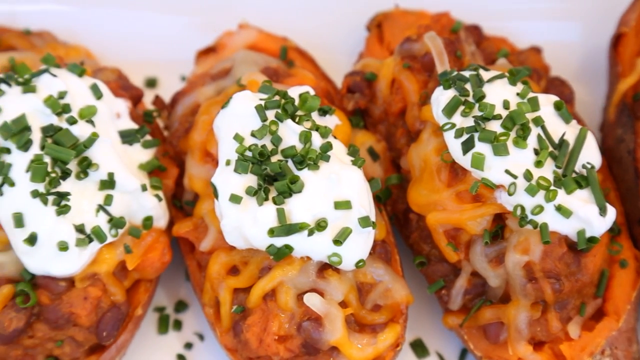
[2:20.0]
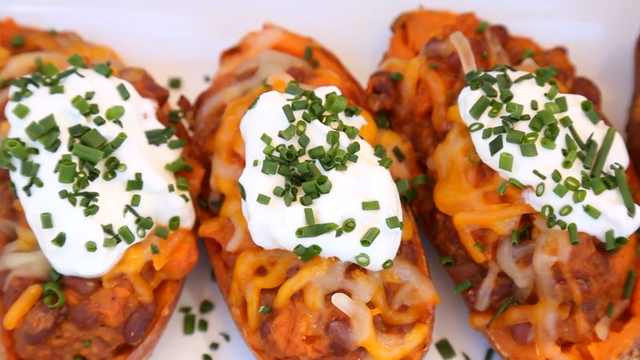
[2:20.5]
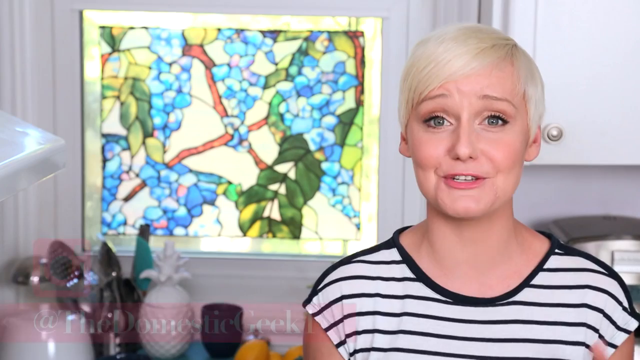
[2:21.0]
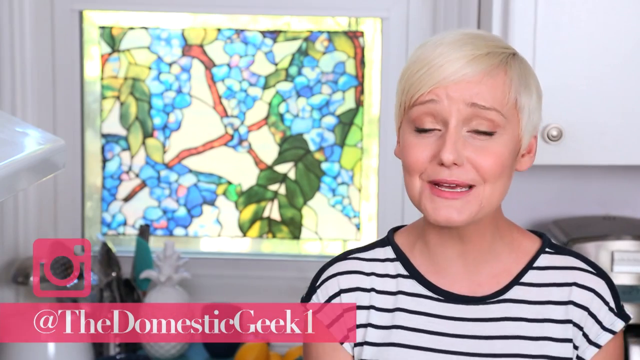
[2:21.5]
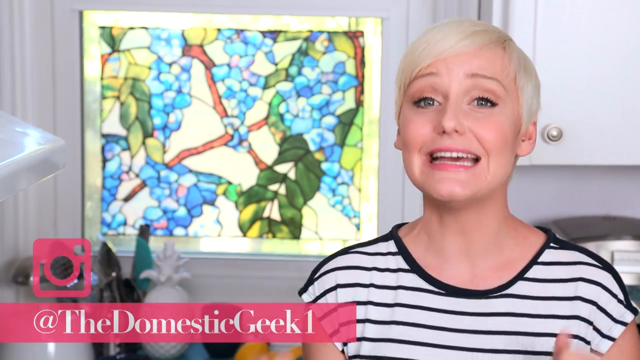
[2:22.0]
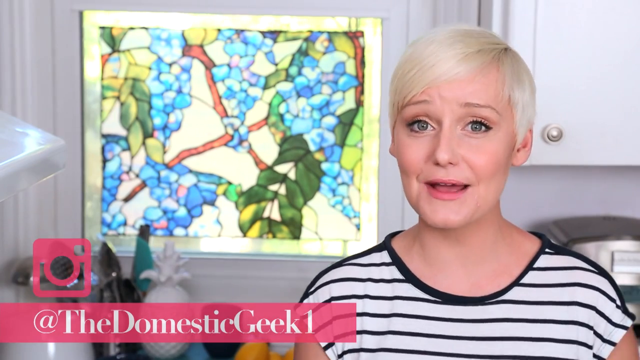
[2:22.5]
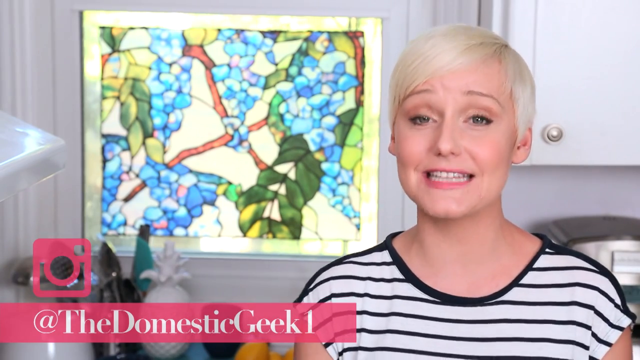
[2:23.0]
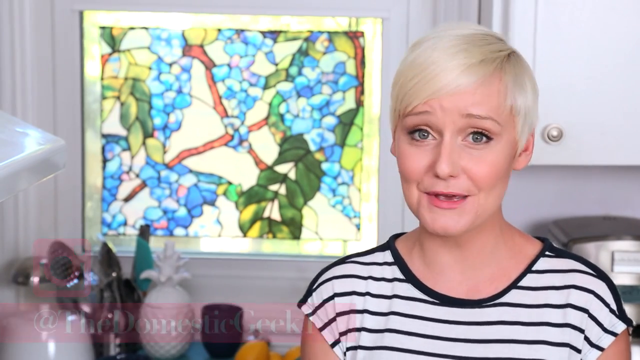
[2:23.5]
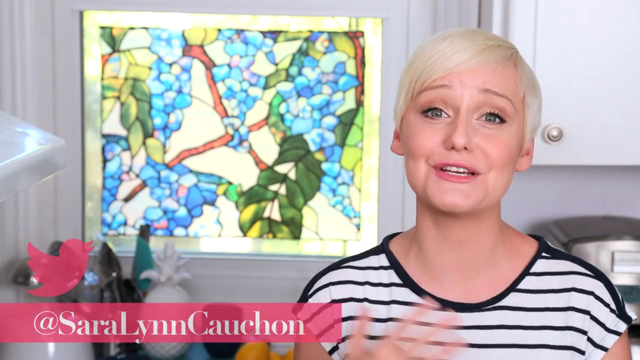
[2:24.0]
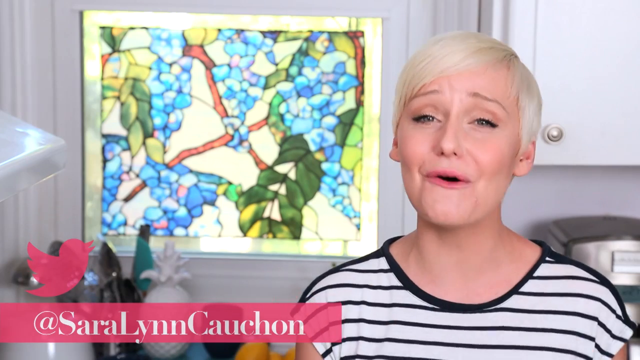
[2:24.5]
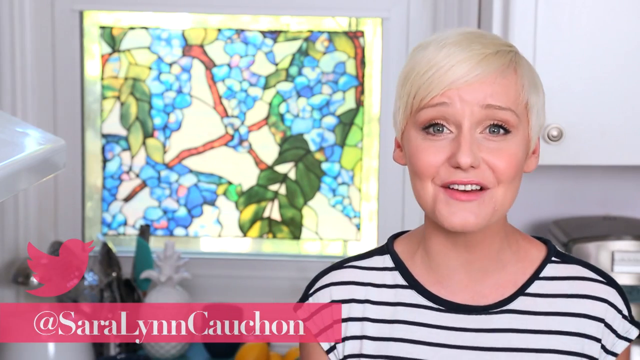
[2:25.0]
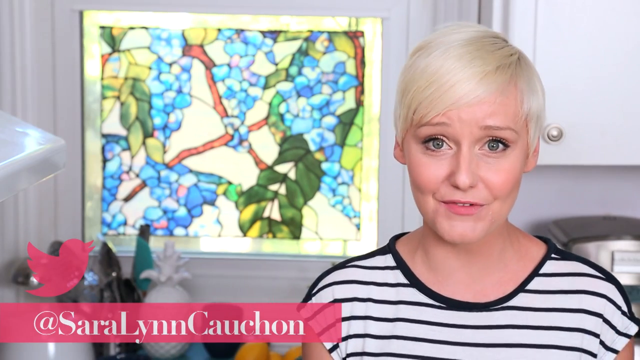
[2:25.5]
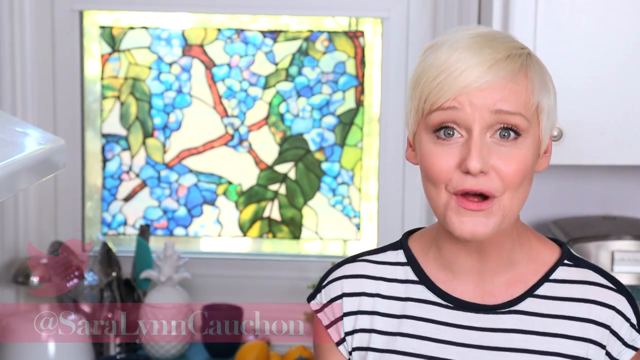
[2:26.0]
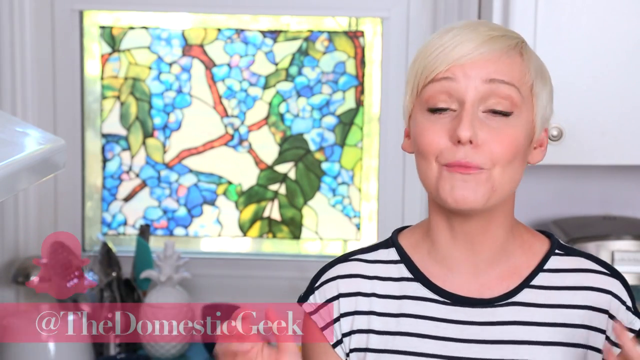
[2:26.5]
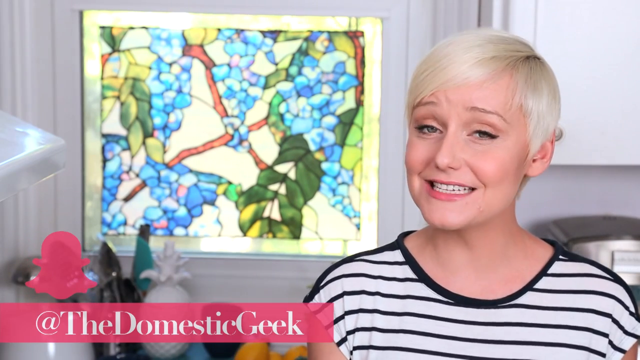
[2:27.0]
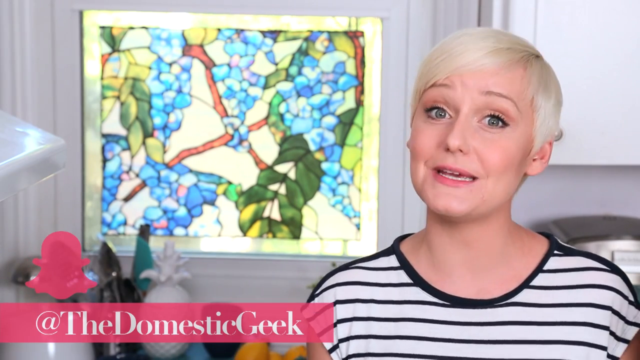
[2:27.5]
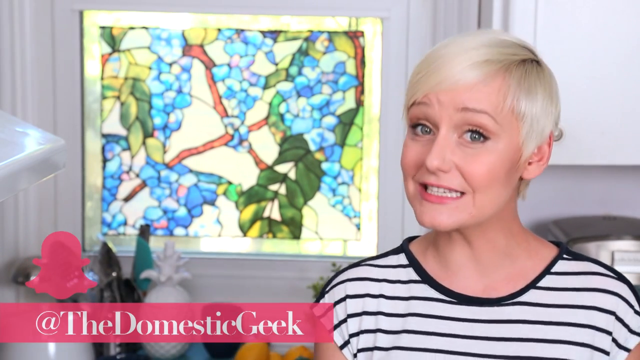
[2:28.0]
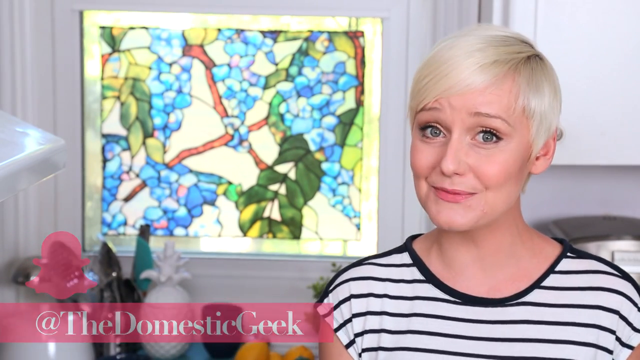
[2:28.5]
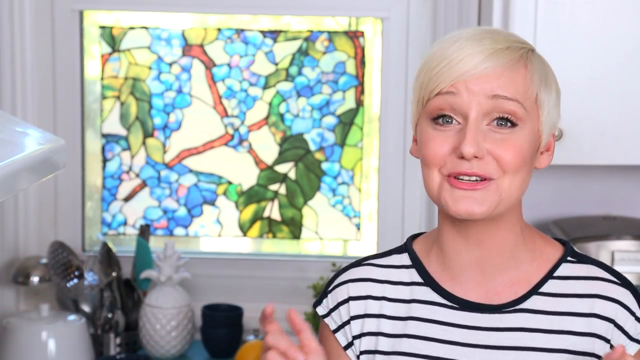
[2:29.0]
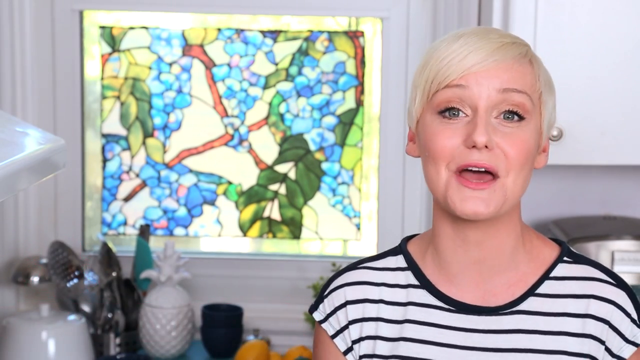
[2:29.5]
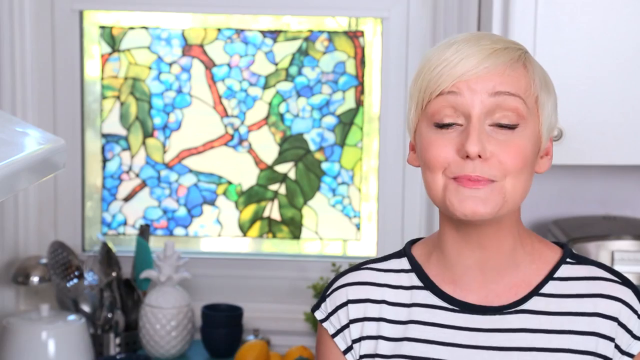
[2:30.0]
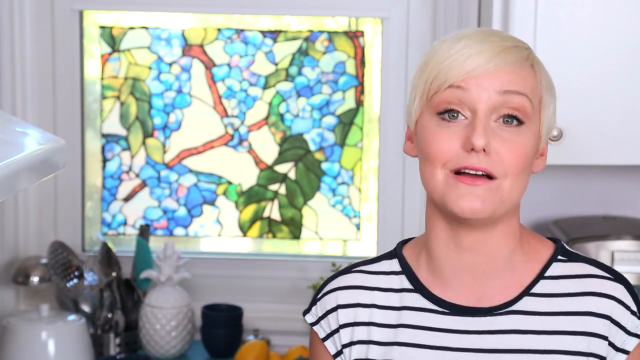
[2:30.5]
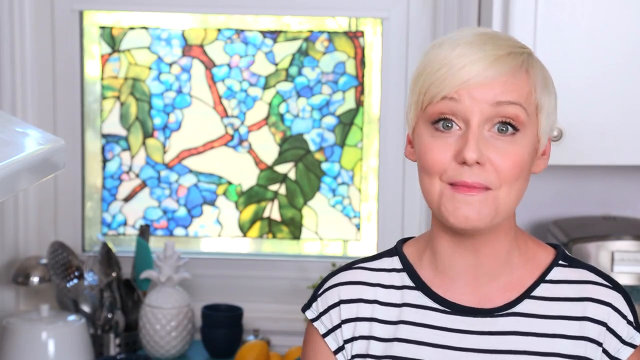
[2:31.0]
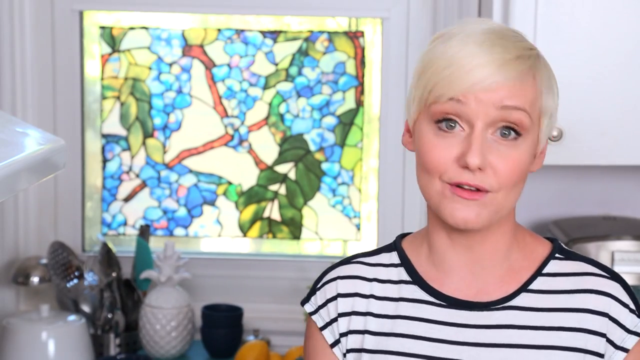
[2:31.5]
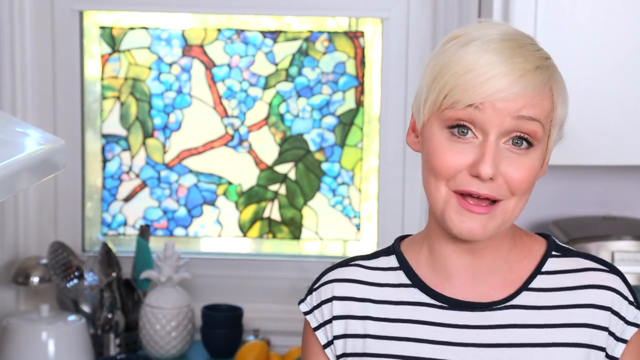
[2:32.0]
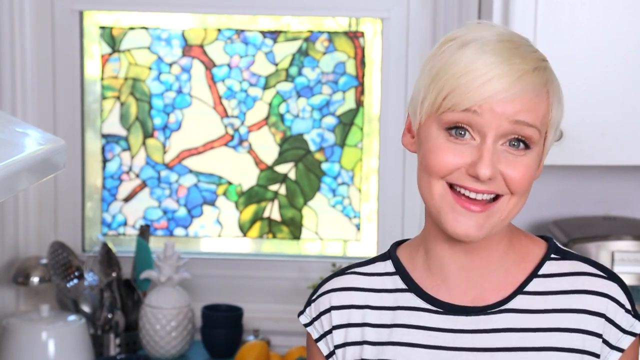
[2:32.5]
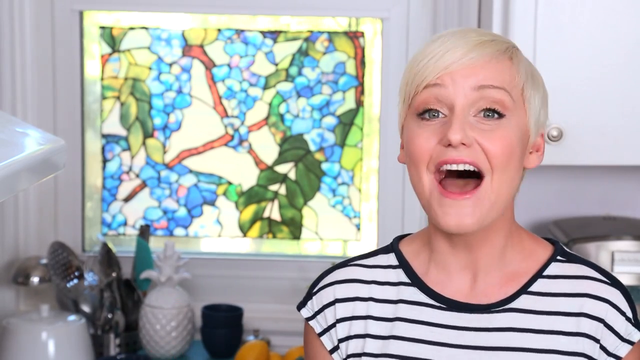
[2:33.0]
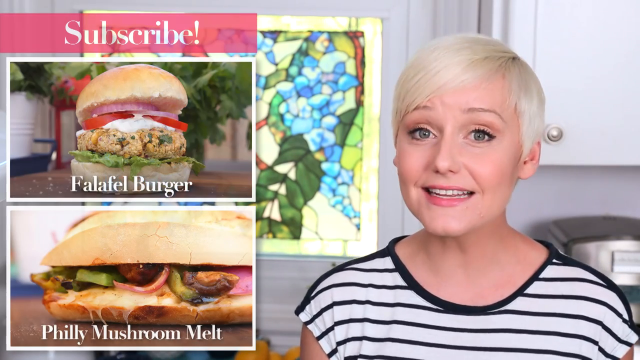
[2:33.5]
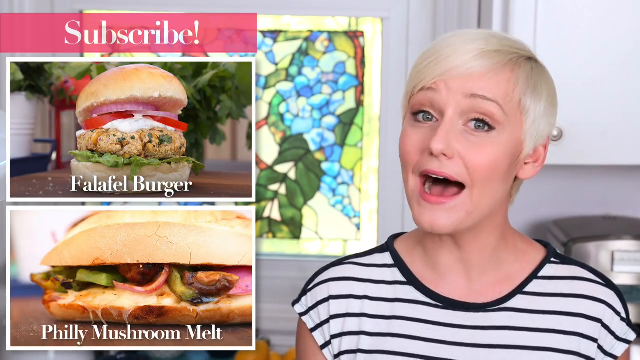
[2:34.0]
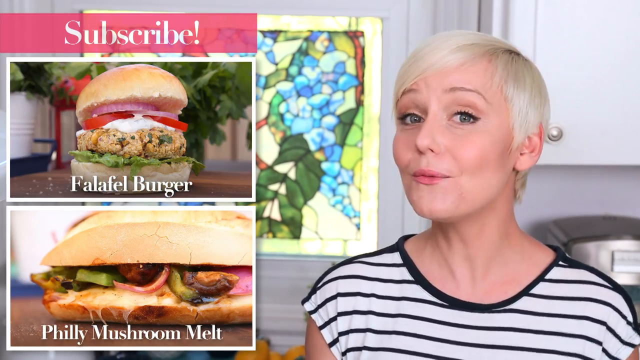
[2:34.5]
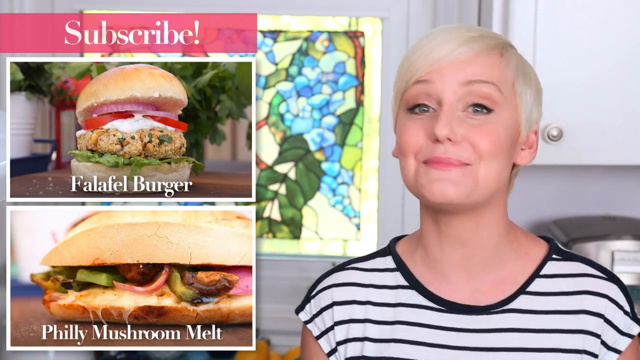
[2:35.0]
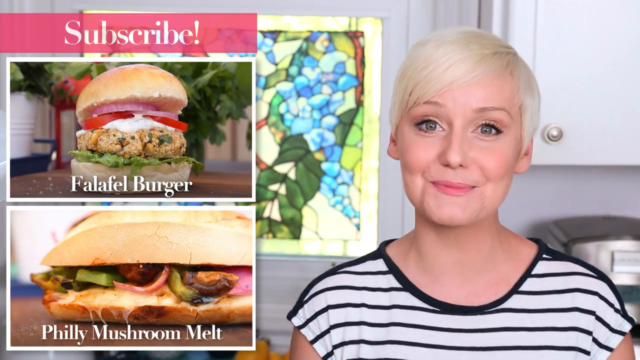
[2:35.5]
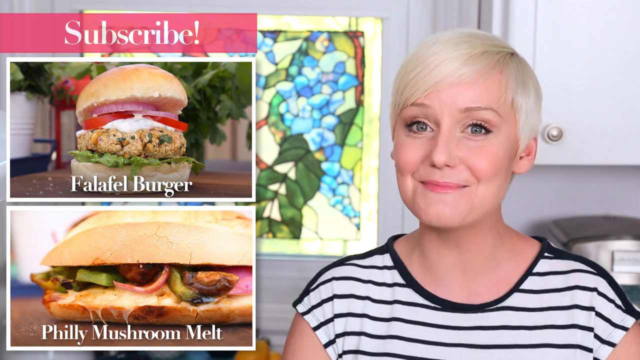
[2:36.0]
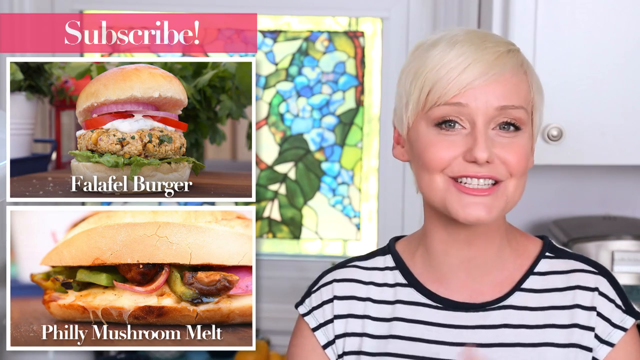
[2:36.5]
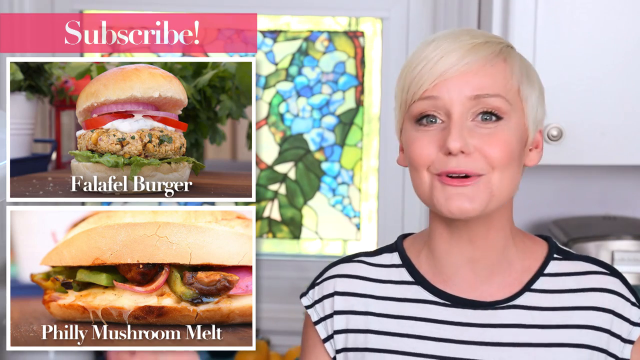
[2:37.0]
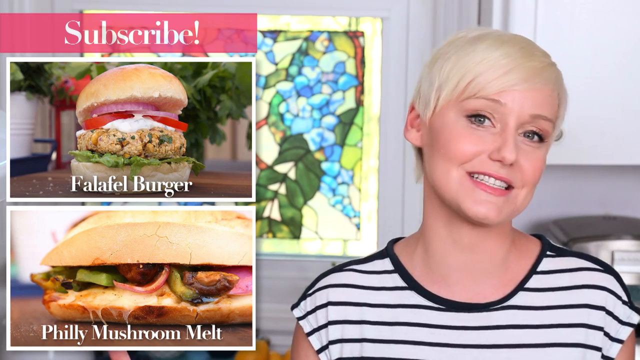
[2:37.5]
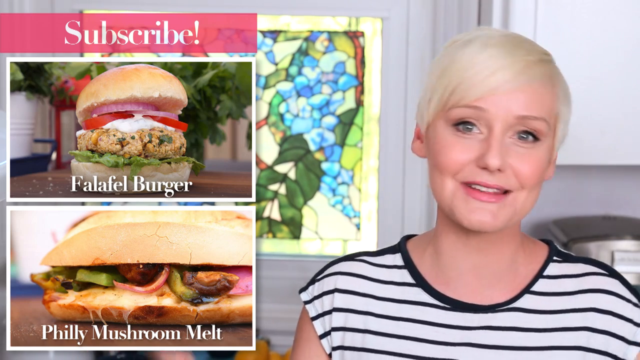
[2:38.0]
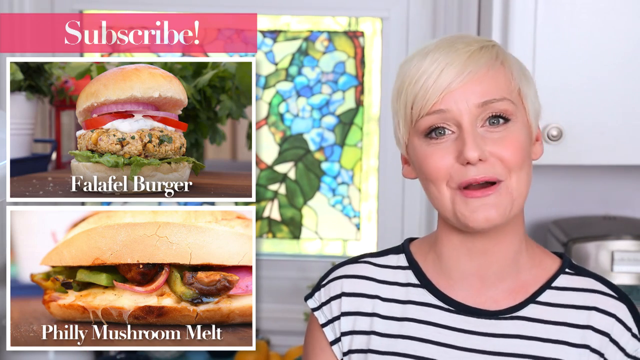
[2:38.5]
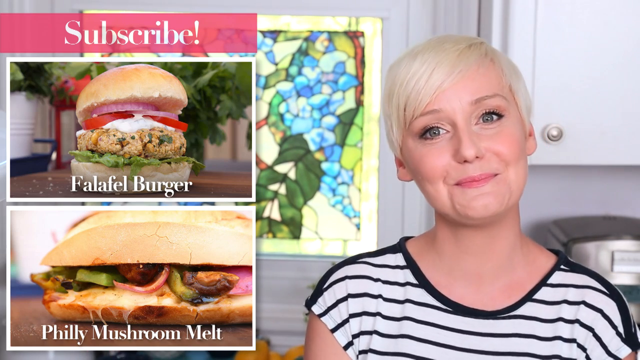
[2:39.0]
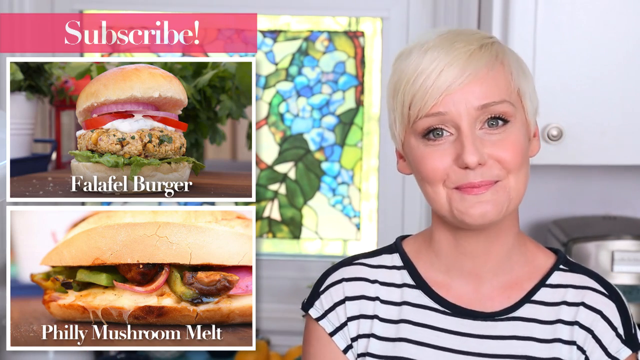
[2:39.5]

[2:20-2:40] The same woman in the black and white striped shirt is still talking to the camera and gesturing with her hands. A tag appears at the bottom left with a red or magenta camera icon, maybe for Instagram, and a magenta bar with the @ symbol and the text "TheDomesticGeek1". She continues talking. Then a magenta Twitter icon appears with the same magenta bar, the @ symbol and the text "SaraLynnCauchon". Then a magenta Snapchat icon appears with the @ symbol and the text "TheDomesticGeek". She continues to talk and gesture with her hands. Then a graphic on the left shows the magenta bar with the text "subscribe!". Finally two images appear, one labeled "falafel burger" at the top and the other labeled "Philly mushroom melt" at the bottom.